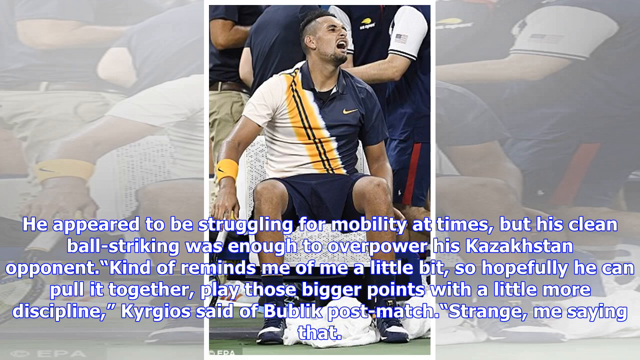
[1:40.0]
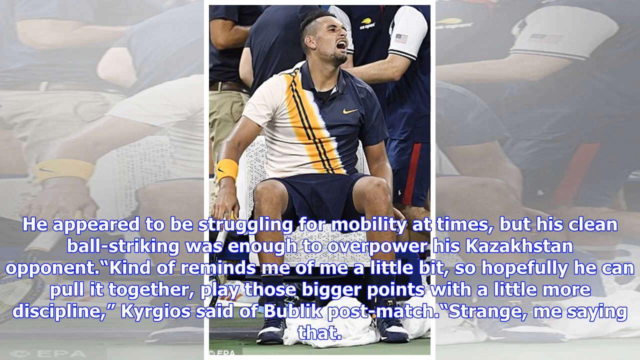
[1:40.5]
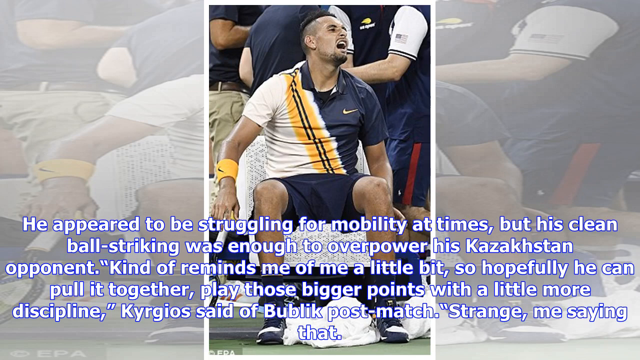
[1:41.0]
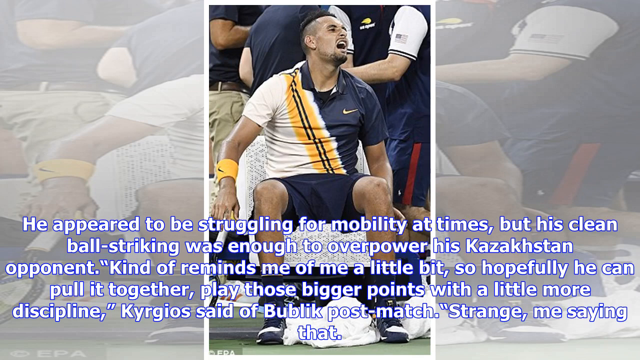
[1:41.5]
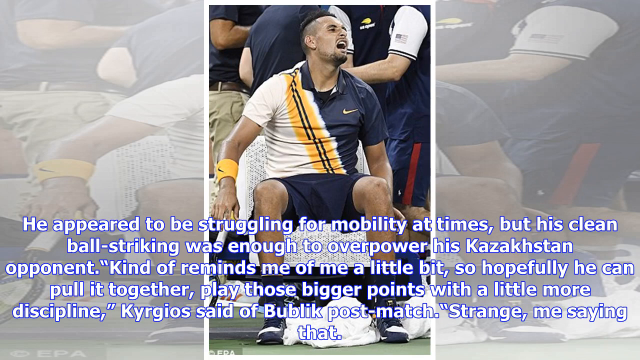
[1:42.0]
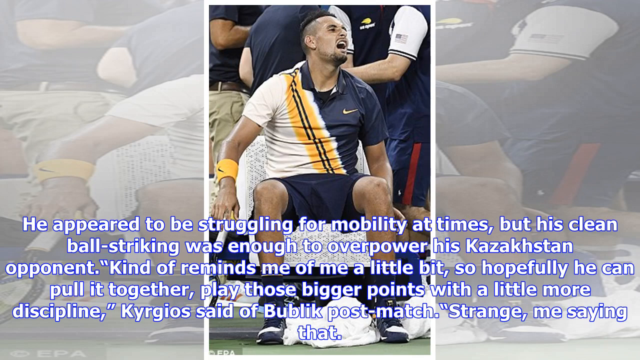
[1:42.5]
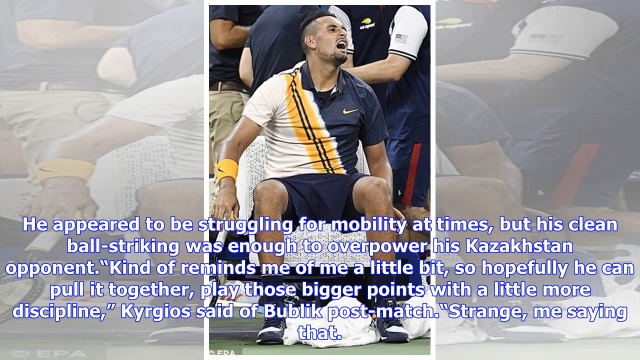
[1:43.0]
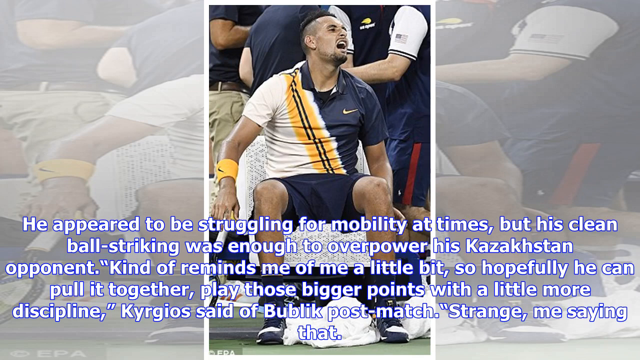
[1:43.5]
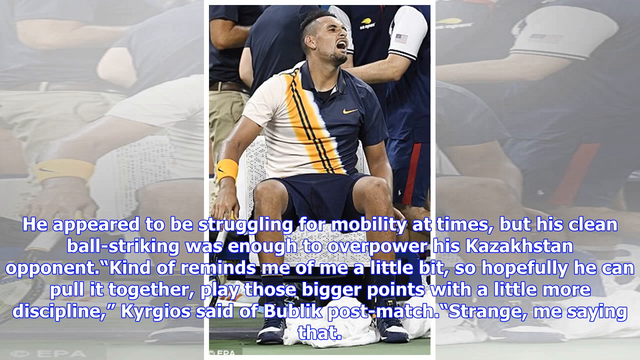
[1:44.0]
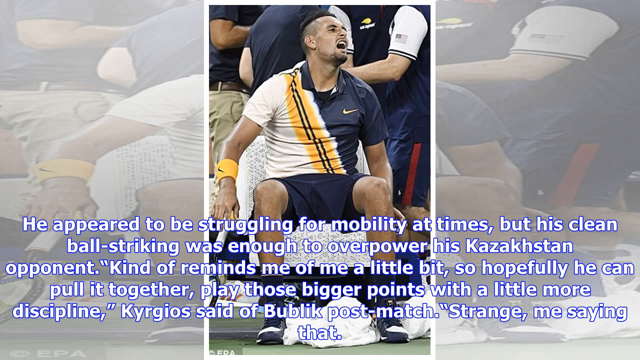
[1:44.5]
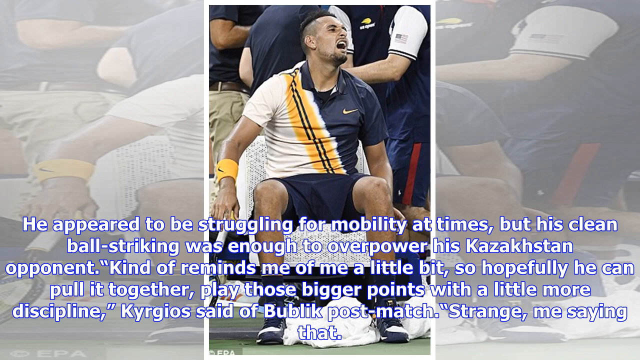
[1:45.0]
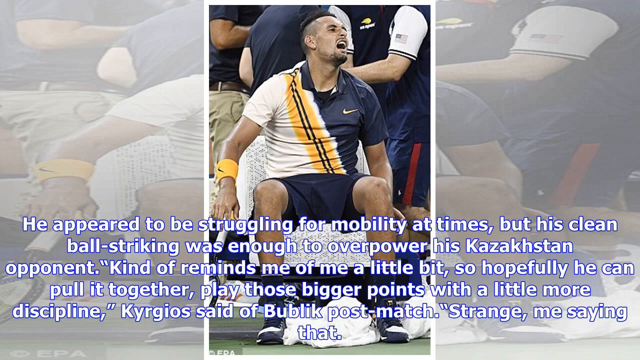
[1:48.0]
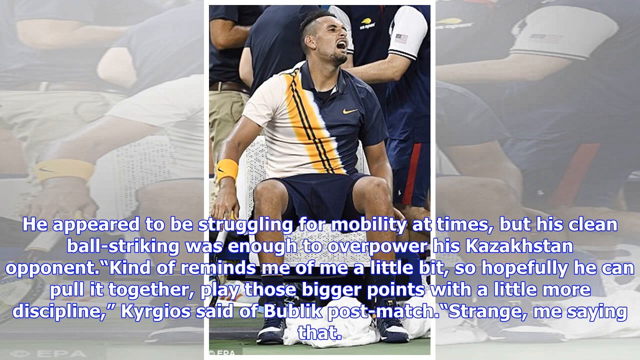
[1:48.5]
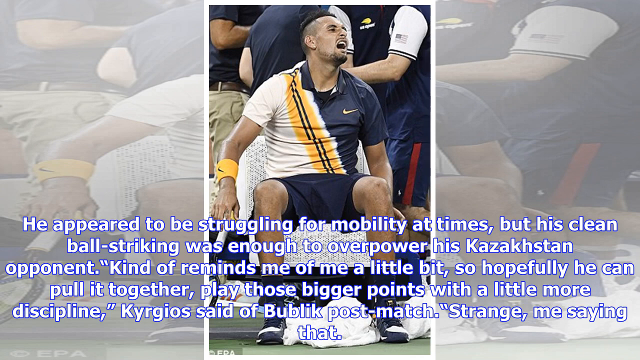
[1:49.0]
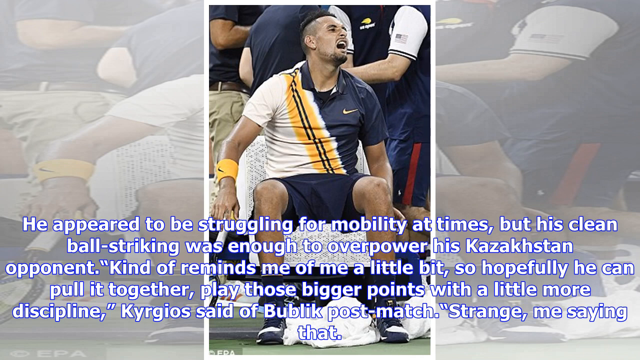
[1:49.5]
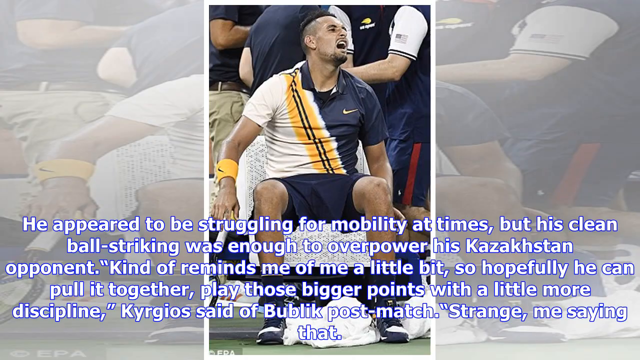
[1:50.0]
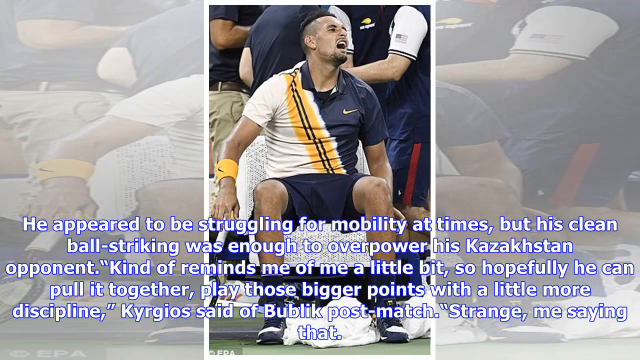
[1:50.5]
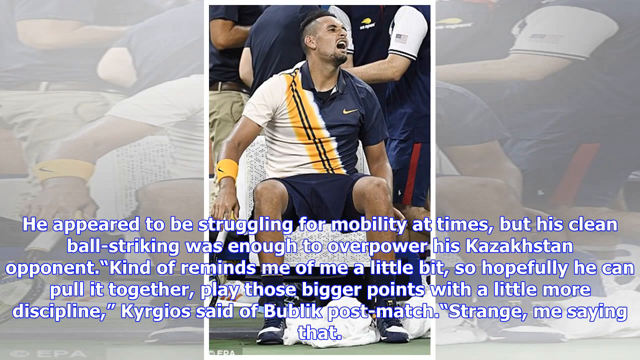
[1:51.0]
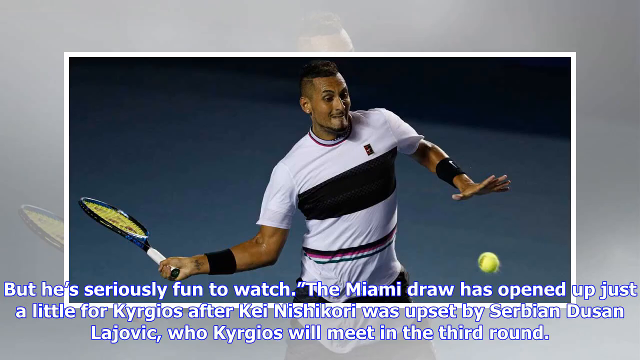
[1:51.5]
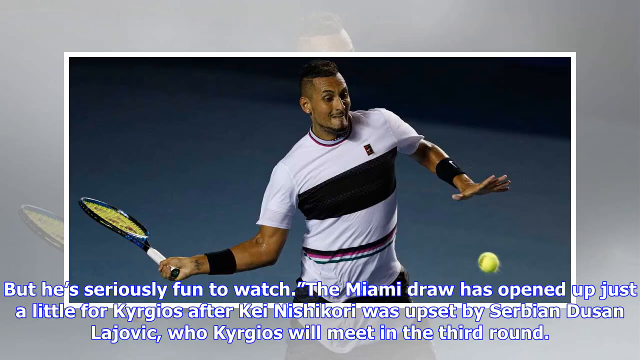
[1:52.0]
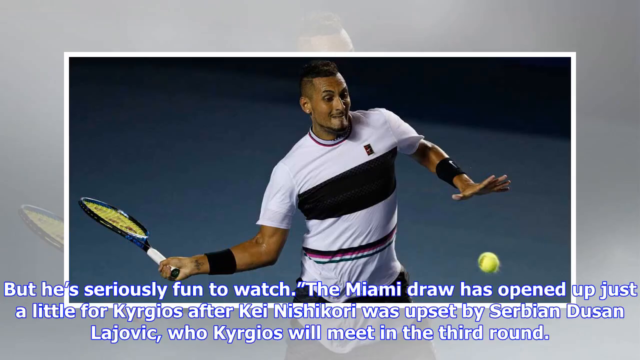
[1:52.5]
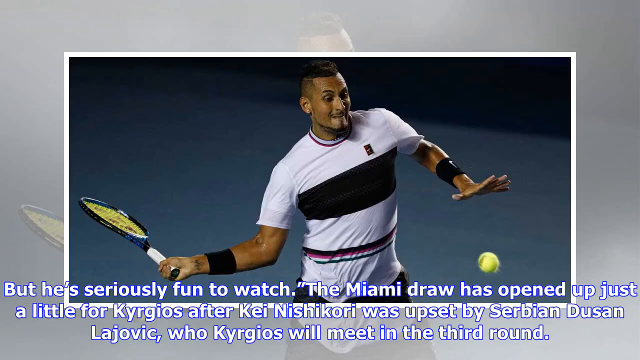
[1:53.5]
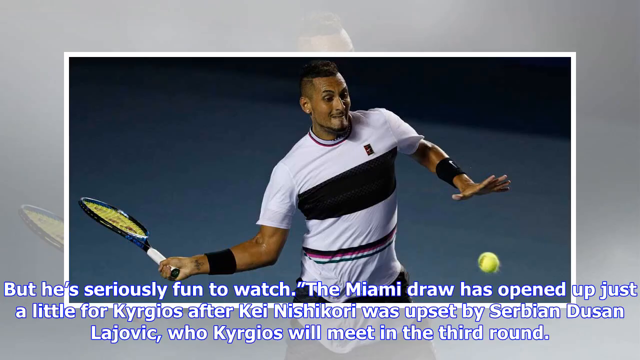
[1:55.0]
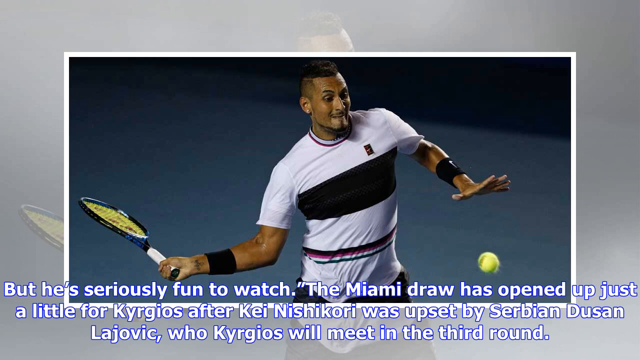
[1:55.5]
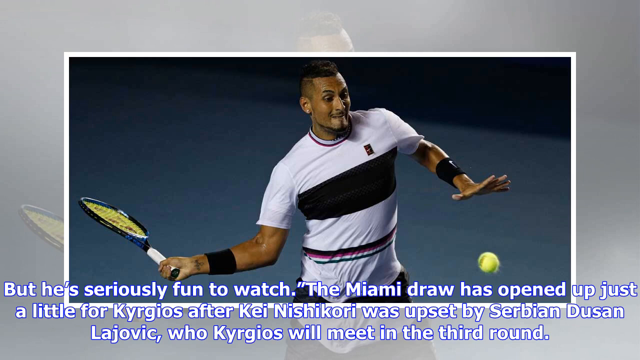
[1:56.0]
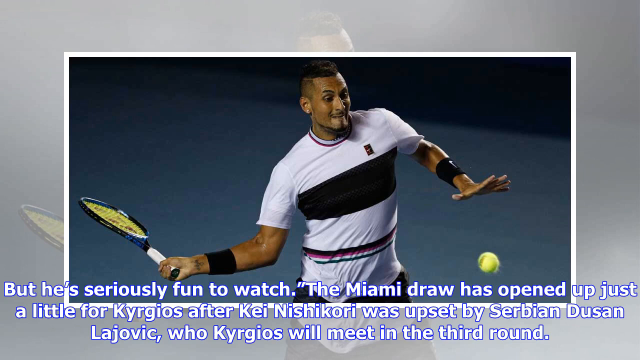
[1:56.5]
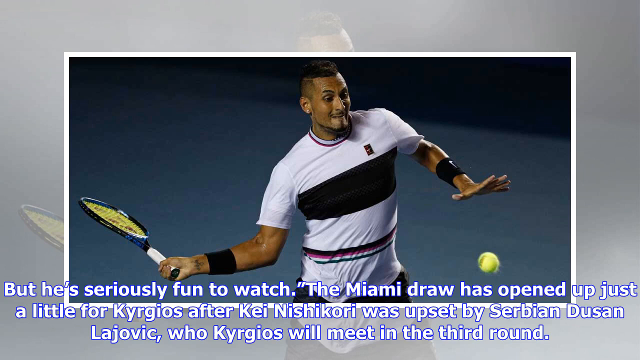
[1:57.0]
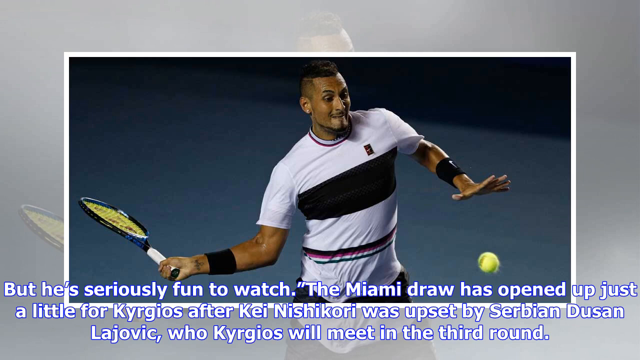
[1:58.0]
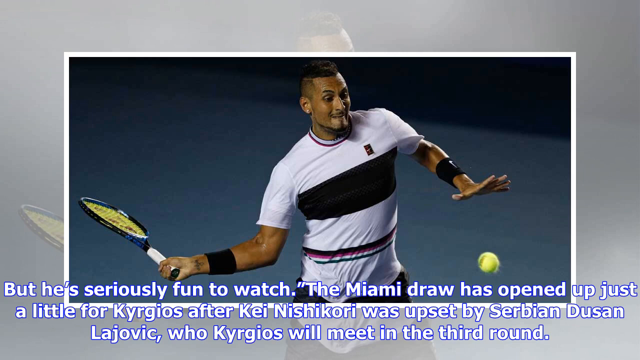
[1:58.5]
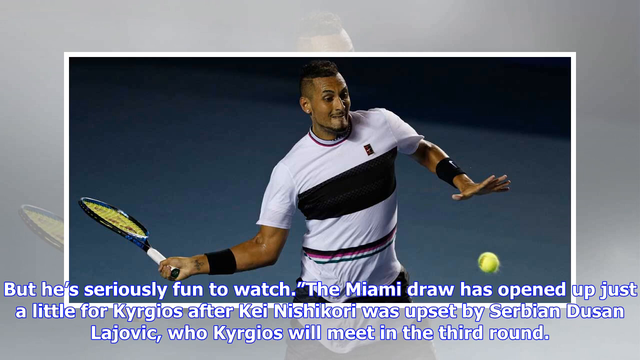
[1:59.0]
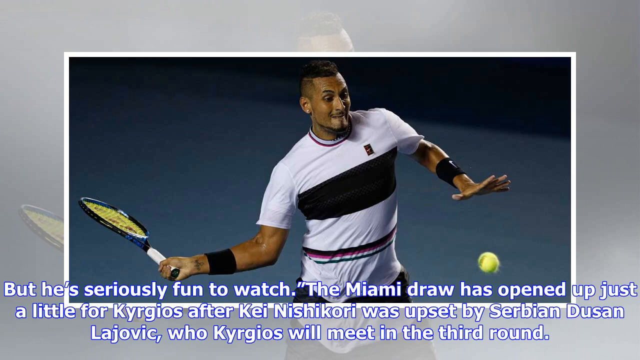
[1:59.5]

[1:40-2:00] The picture of Kyrgios sitting in his chair in the blue, orange and white Nike shirt appears, lasting for quite a while, with text saying he appeared to be struggling for mobility. It is followed by the picture of him midway through striking and returning the ball with his racket, making a funny face and looking intense and focused. Text reads "the Miami draw has opened up just a little for Kyrgios. After Kay Nishikori was upset by Serbian Dusan Lajovic, Kyrgios will meet in the third round."